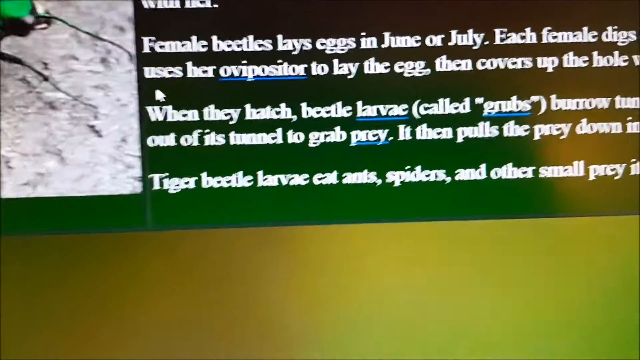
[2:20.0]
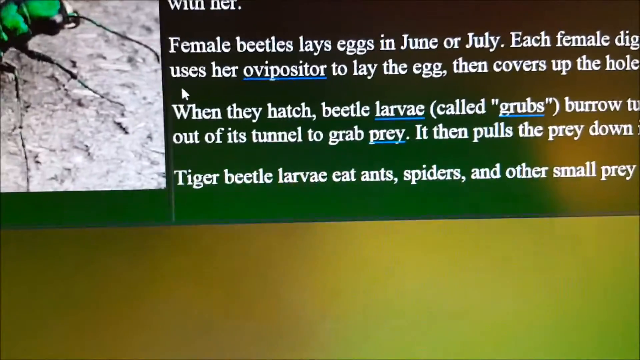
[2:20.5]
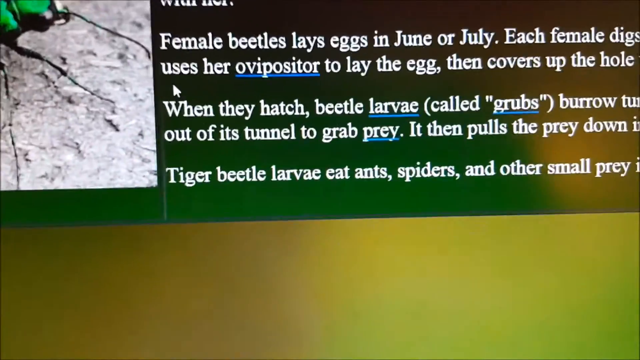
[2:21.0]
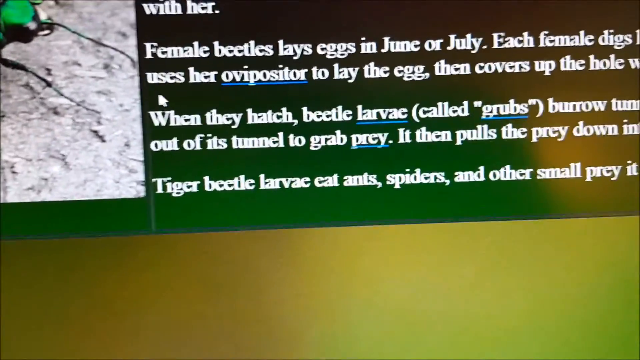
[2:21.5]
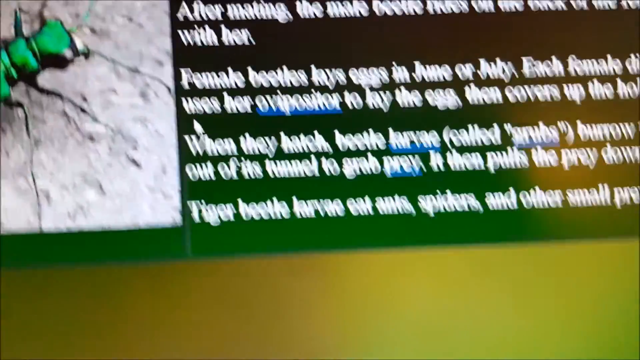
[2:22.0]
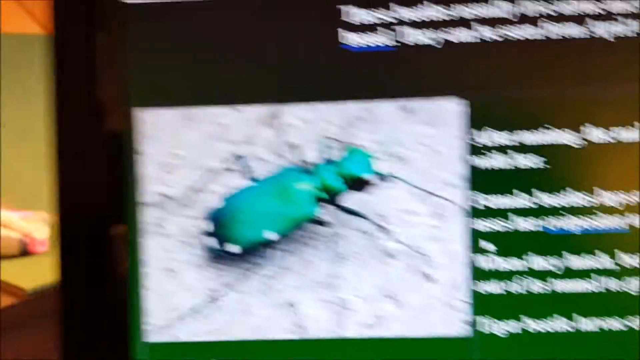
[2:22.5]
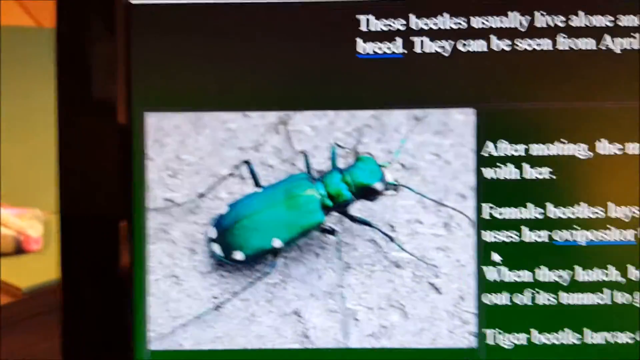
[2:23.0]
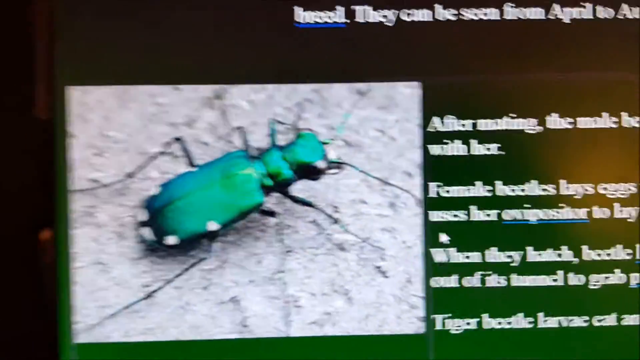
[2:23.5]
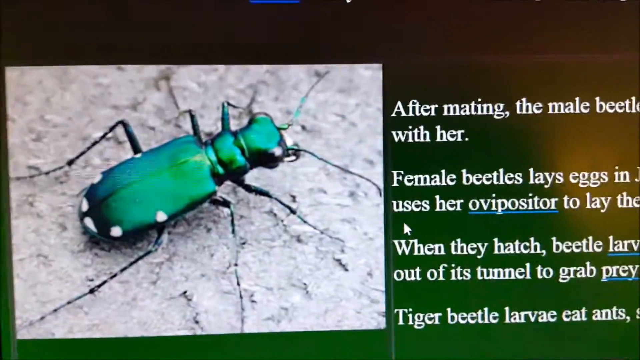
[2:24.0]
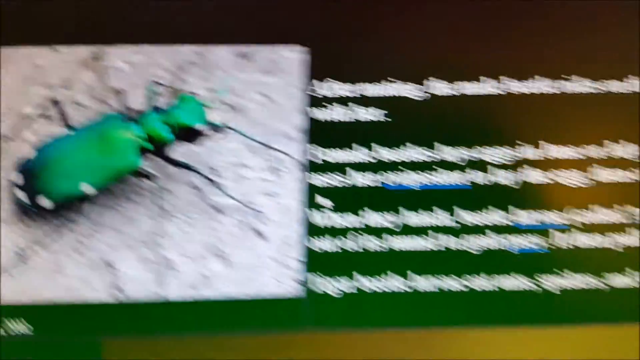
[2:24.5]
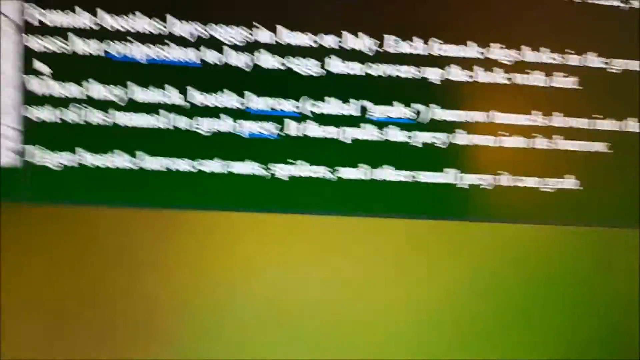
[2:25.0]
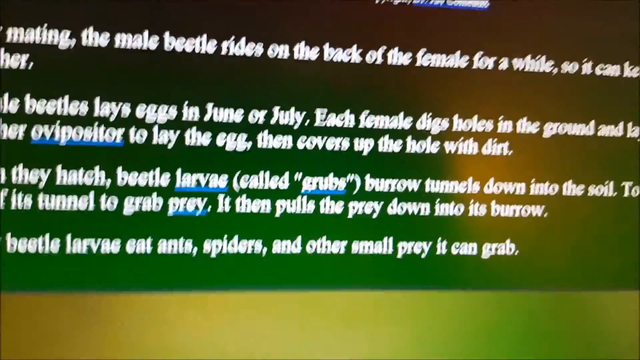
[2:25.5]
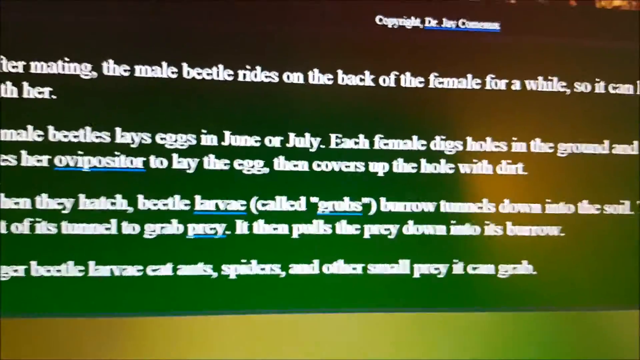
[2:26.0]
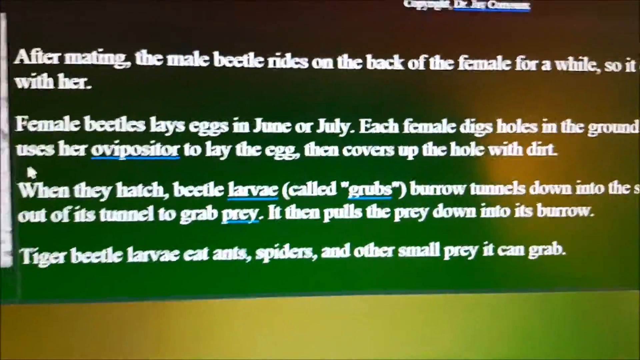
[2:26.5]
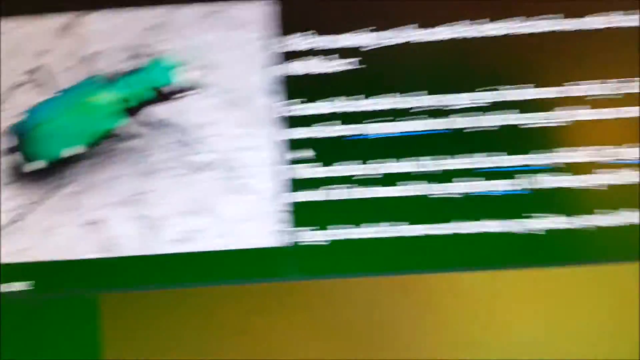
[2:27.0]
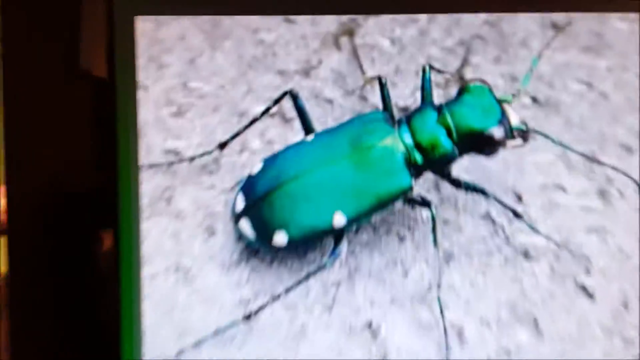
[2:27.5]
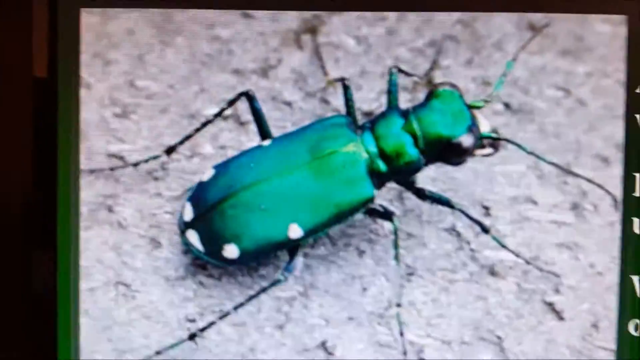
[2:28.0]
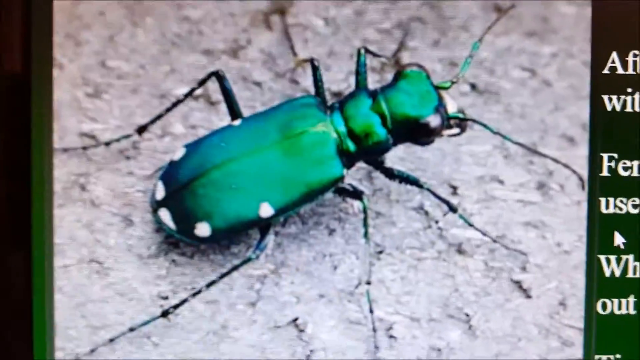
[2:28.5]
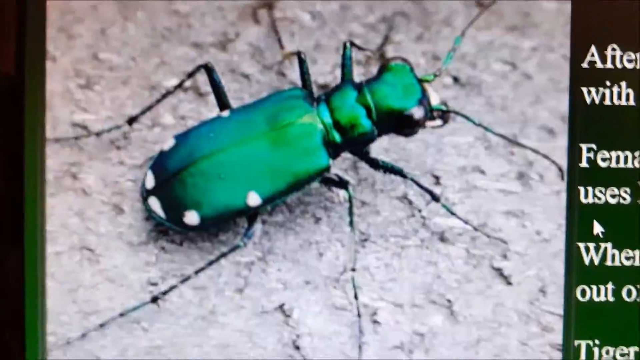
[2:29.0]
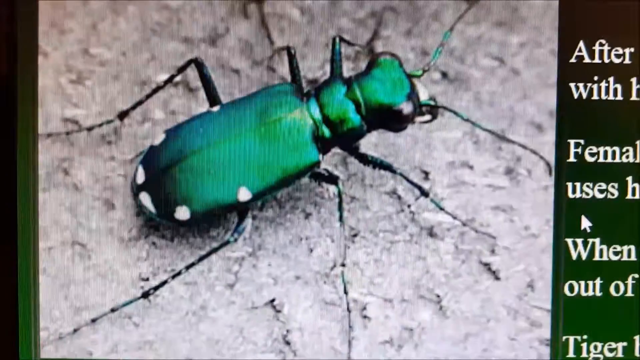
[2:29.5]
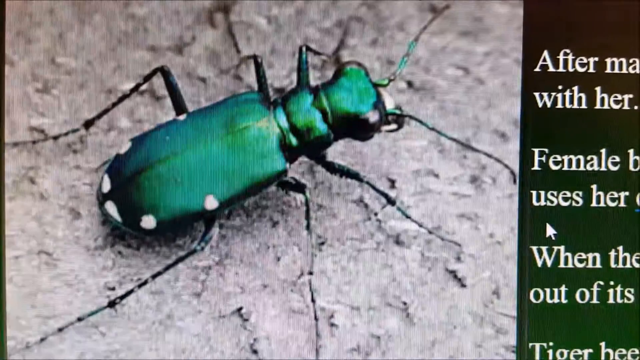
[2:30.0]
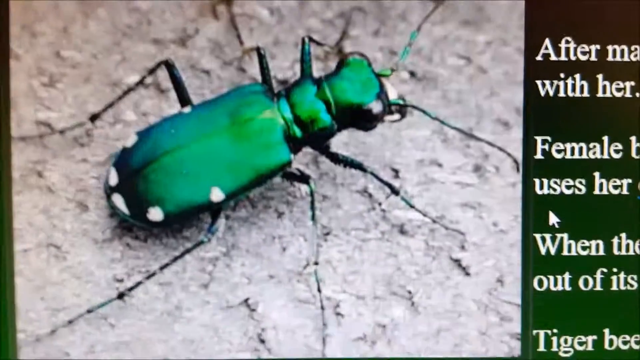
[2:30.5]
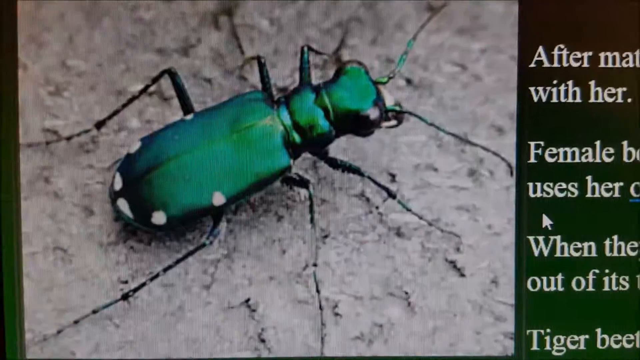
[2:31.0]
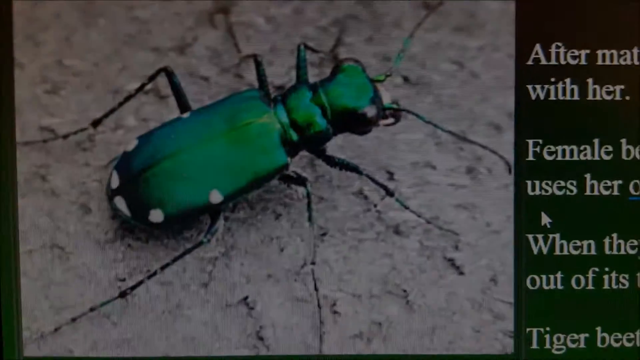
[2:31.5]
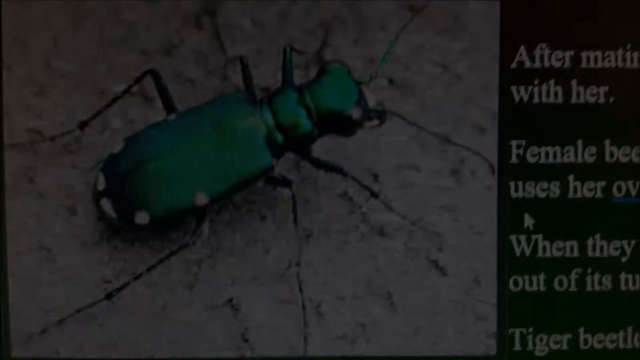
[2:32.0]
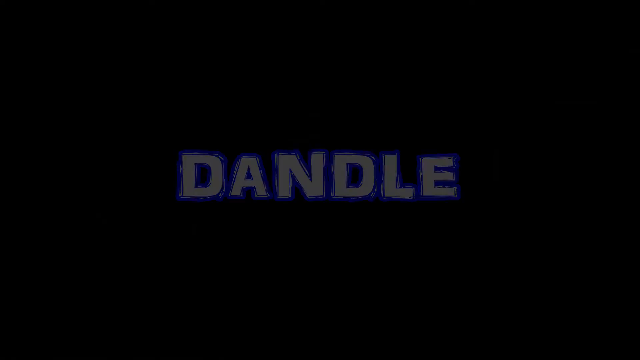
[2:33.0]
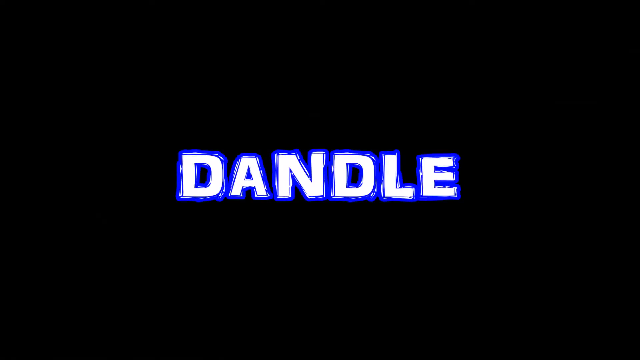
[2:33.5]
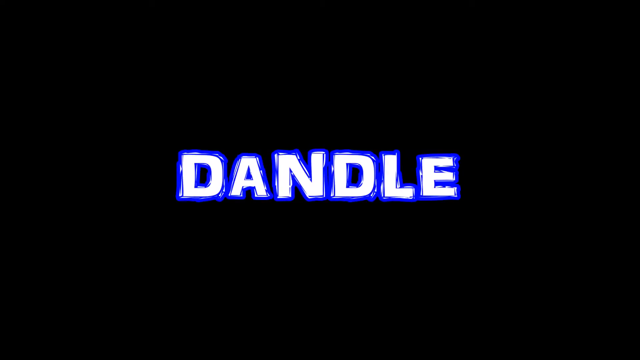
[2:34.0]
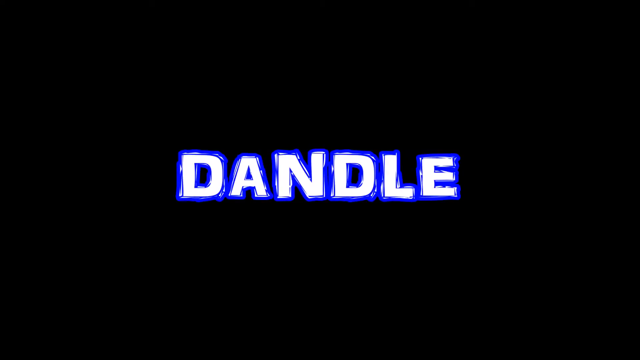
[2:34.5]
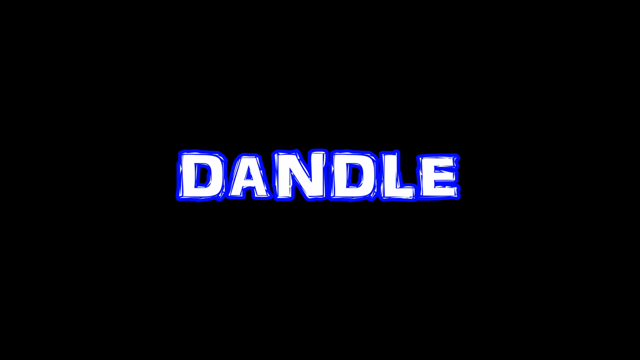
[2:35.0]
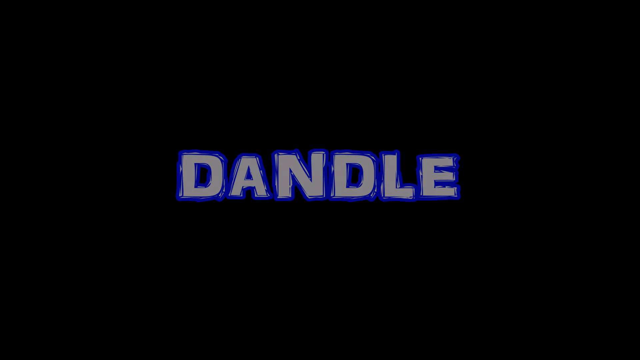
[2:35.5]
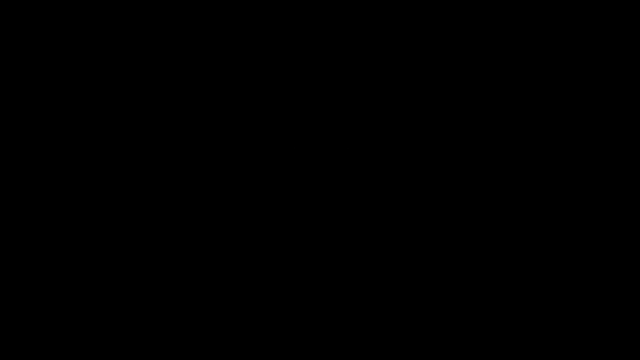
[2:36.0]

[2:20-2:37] The camera keeps moving back and forth between the writing on the screen and the bug, which is on a grey background. The website looks quite simple, with a greeny-yellow-purpley background that is quite yellow in the centre. The picture is off to the left and is quite big, taking up a lot of the room. To its right, in a white standard font, are four very small paragraphs of information, and as the camera moves around, more information in the same white font is visible at the top. The video then seems to fade to black, and "Dandle" appears in capital white letters with a neon dark blue outline.